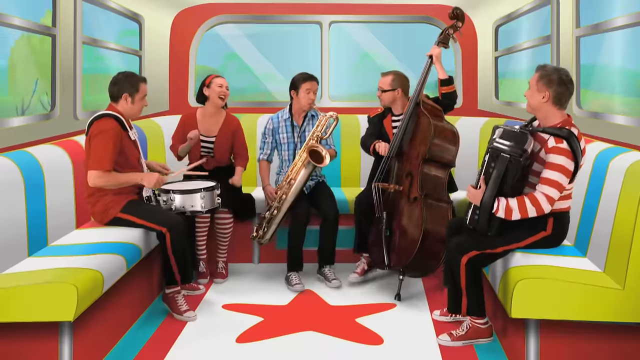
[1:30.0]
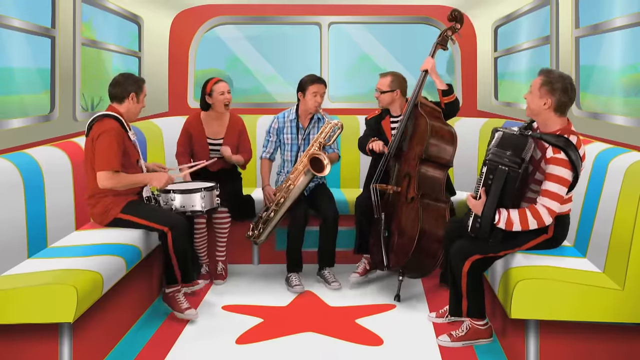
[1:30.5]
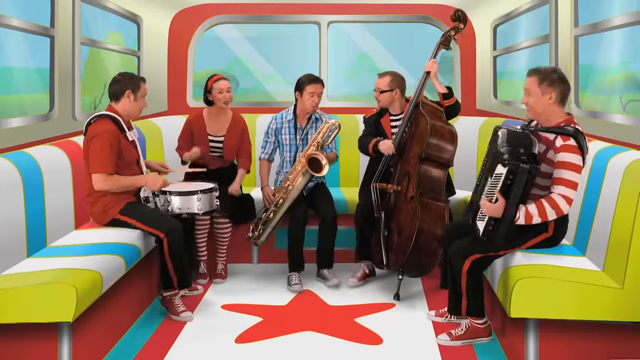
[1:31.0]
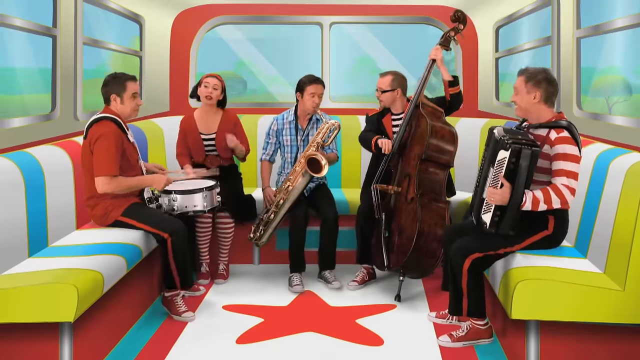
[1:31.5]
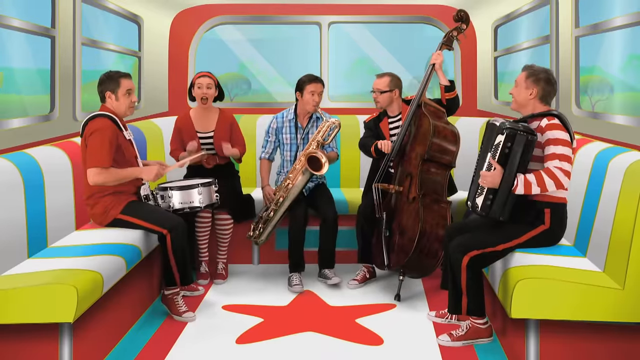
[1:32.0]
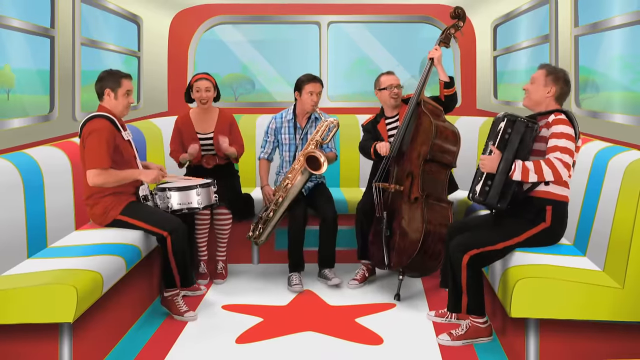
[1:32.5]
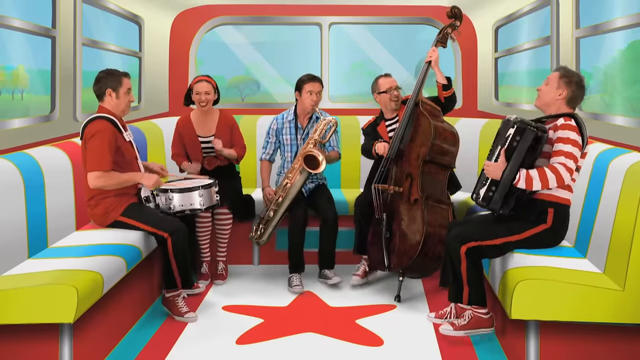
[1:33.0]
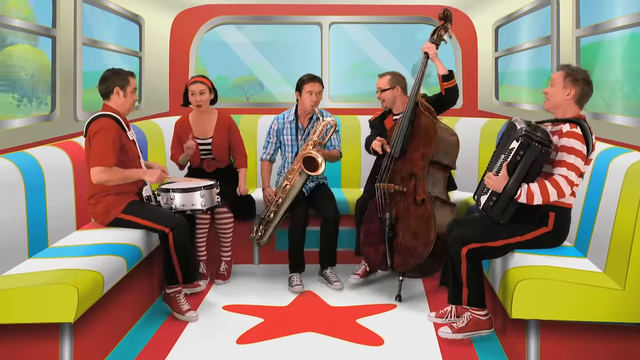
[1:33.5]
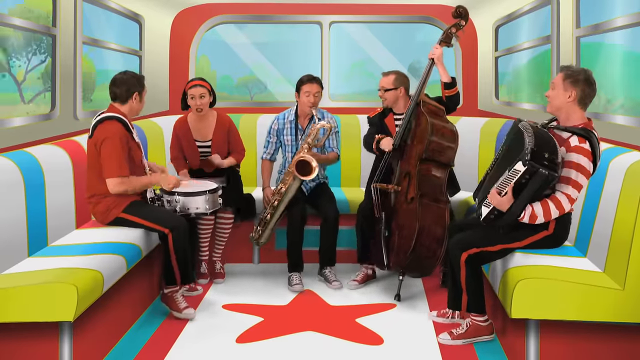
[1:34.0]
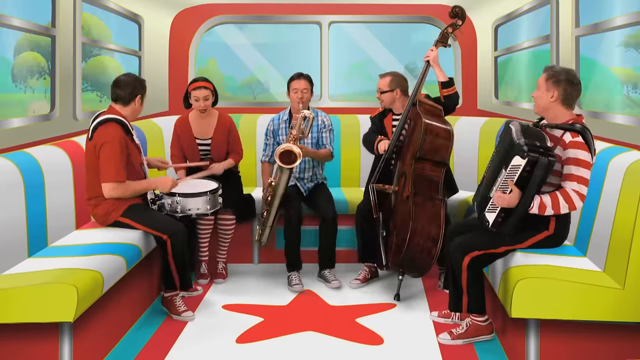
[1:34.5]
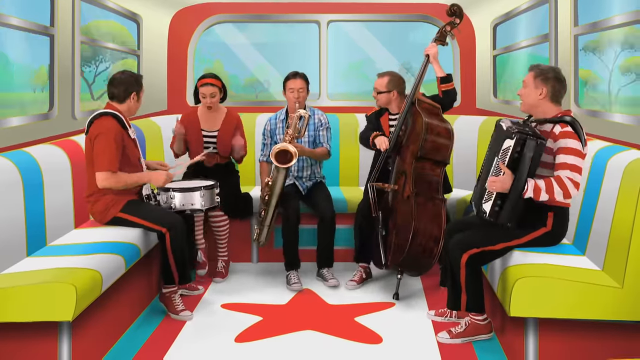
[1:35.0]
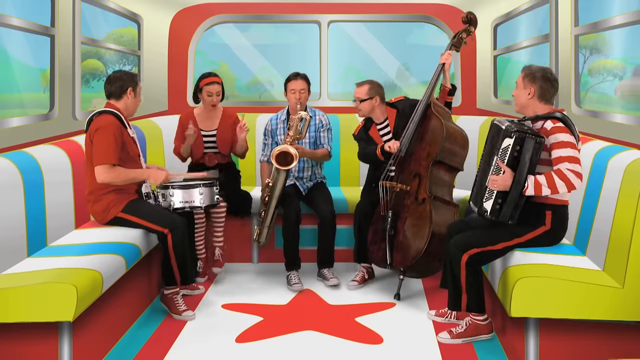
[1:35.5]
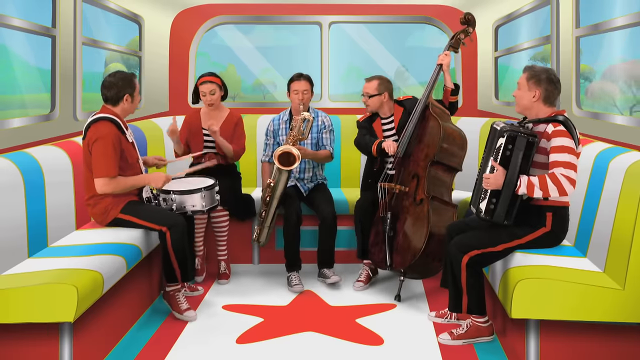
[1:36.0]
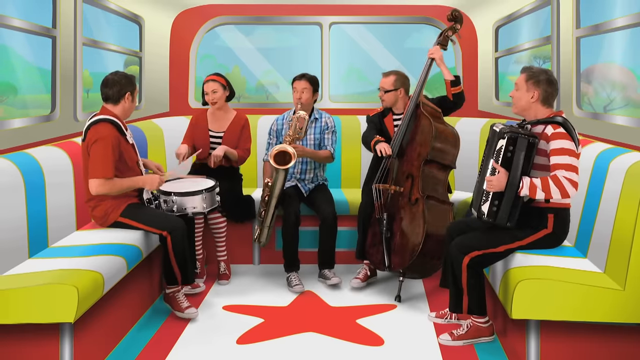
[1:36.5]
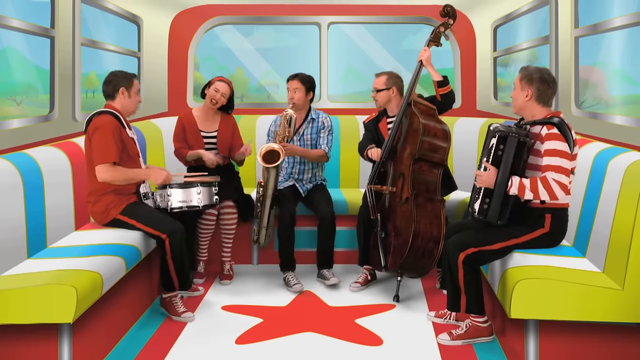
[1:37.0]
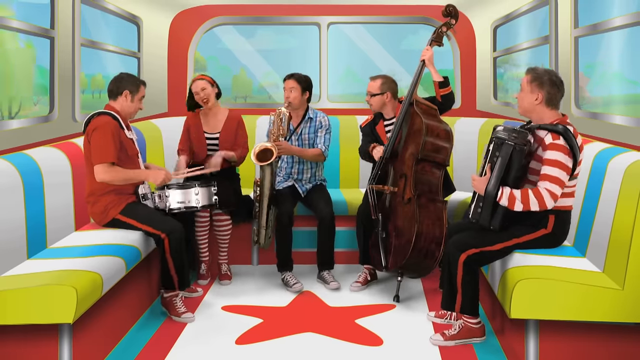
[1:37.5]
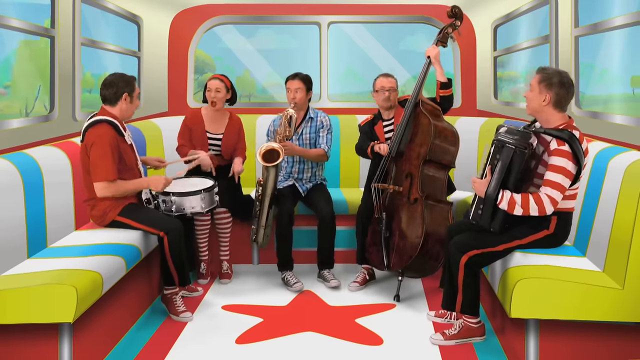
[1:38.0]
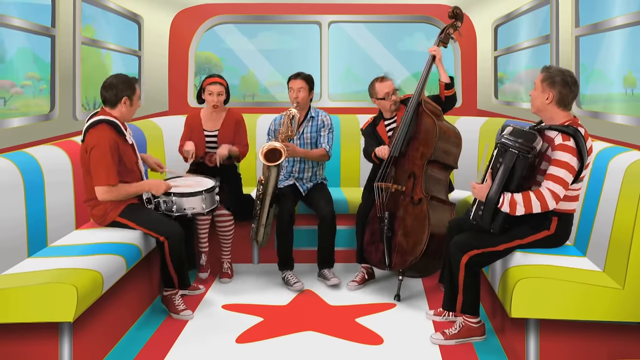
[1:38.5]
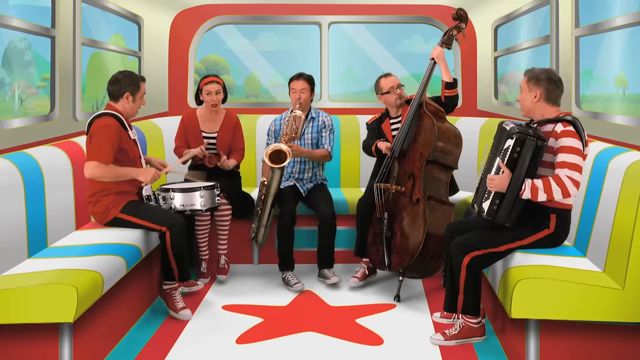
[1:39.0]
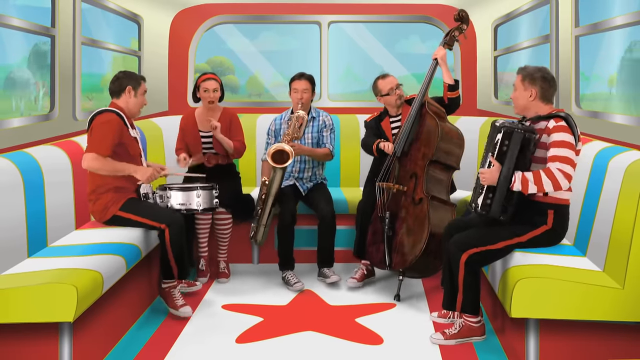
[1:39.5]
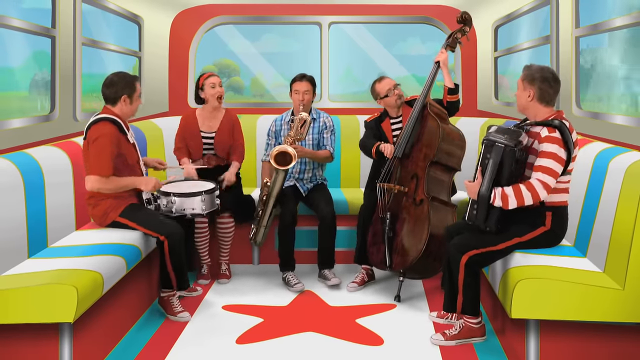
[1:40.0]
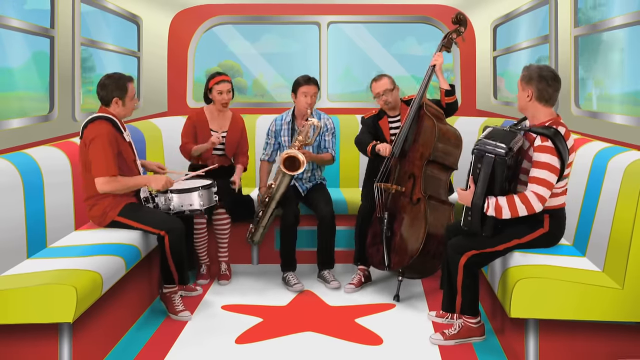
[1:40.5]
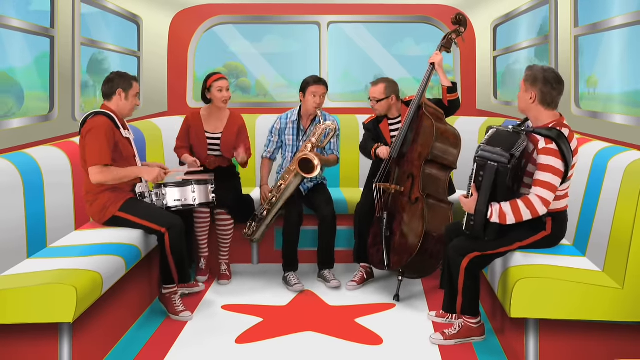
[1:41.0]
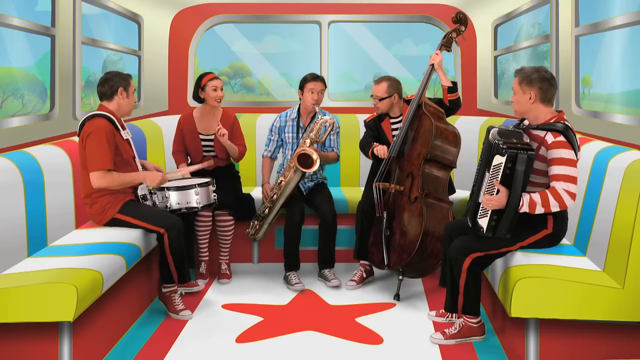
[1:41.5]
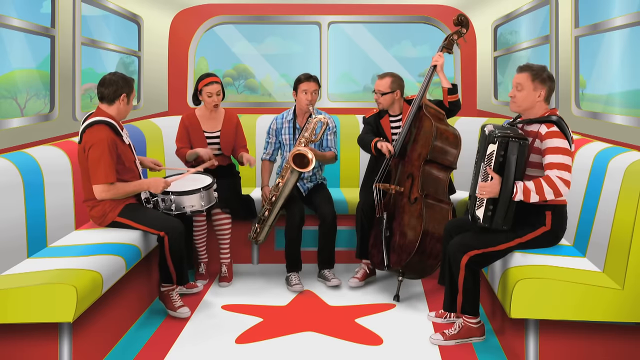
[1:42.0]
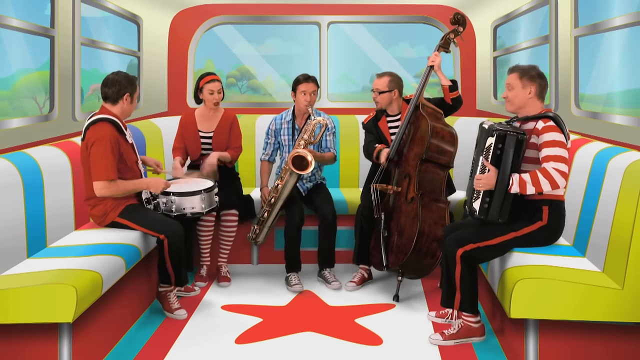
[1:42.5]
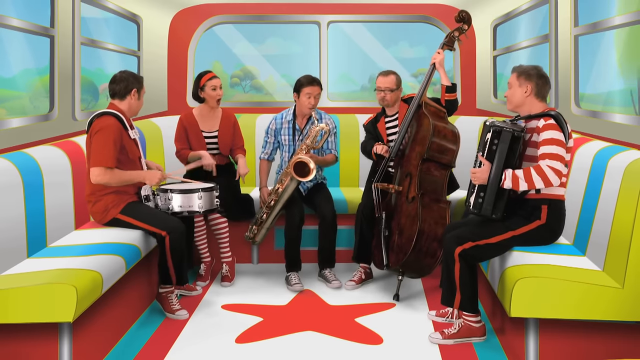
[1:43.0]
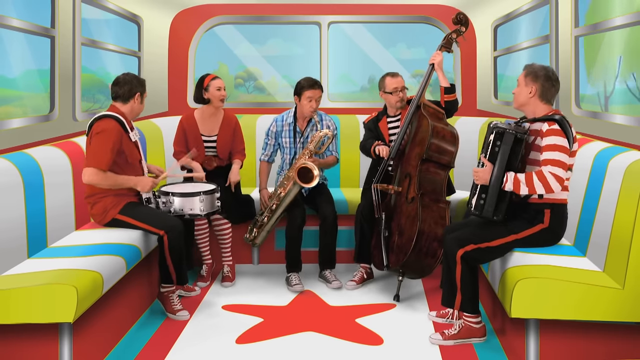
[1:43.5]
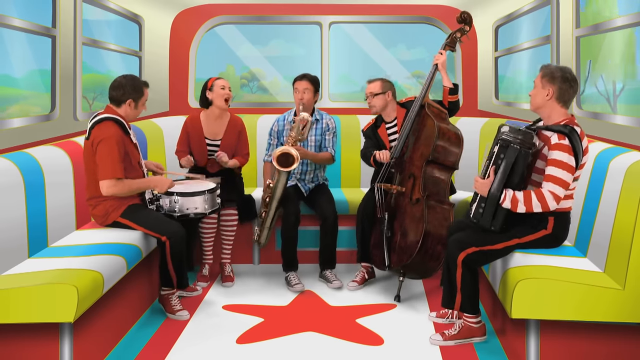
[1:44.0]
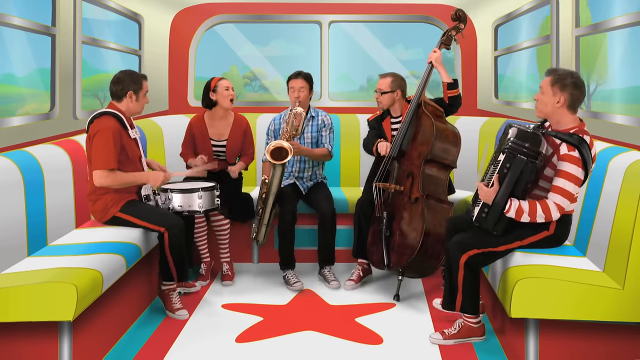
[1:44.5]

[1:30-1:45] The band plays music in the back of the bus. The members are regular people while the bus is animated and looks computer-generated. Four men play a drum, a saxophone, a bass cello and an accordion, and the woman sings while kind of dancing, sitting in her chair. Through the windows, trees go by and there are clouds in the blue sky as the bus moves. The saxophone player is the only one who does not look like he belongs: the band's uniforms are red, white and black and they all wear red high tops, while he wears black pants, black high tops and a blue and white checkered shirt, though he is playing with the band. None of the children are shown. The seats form a U in the back, so the band members sit facing each other.